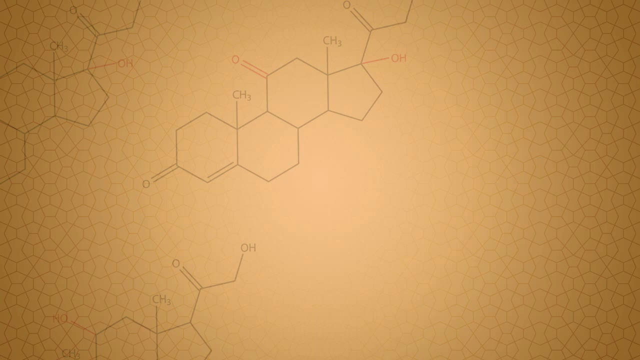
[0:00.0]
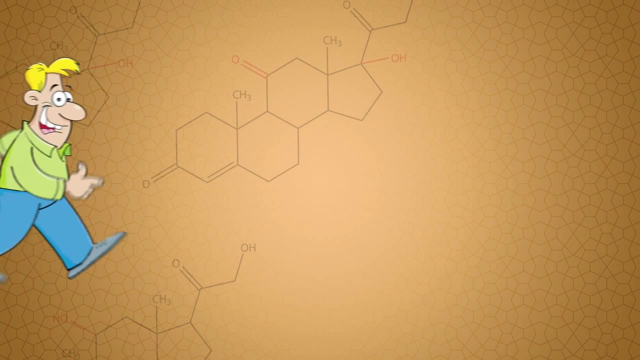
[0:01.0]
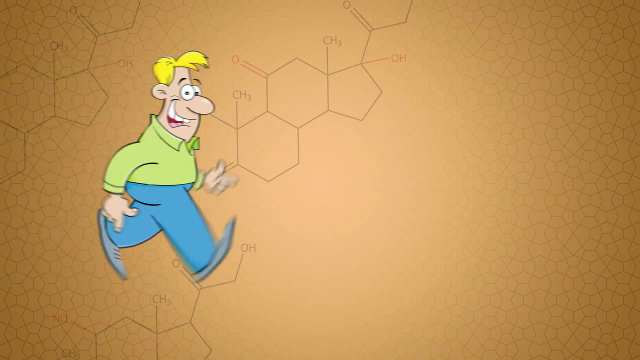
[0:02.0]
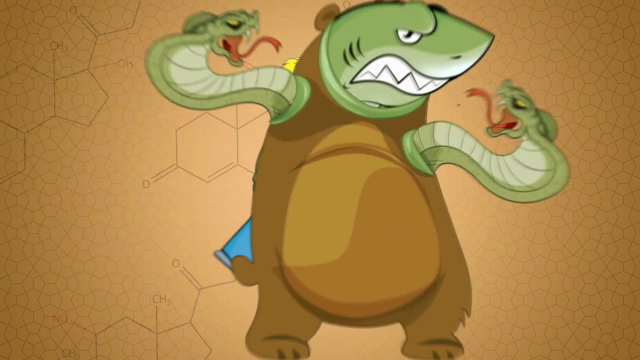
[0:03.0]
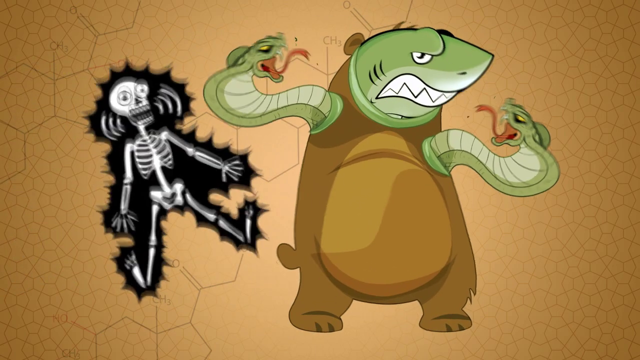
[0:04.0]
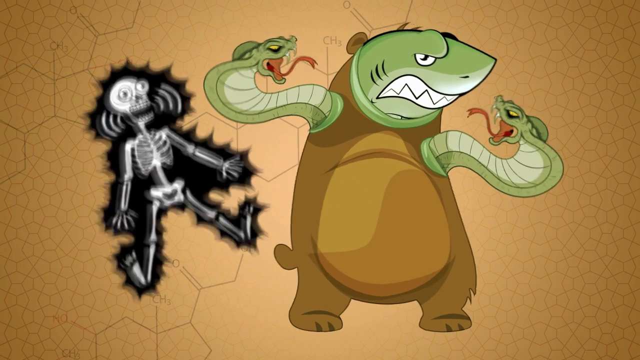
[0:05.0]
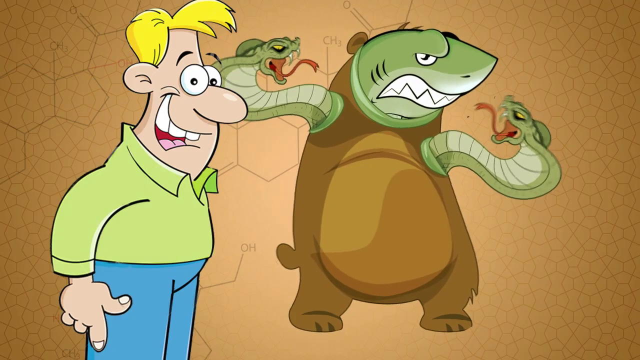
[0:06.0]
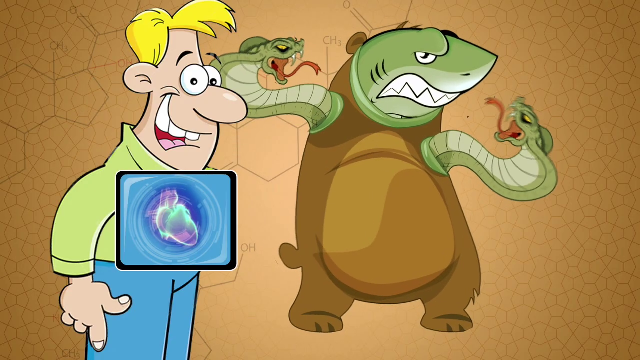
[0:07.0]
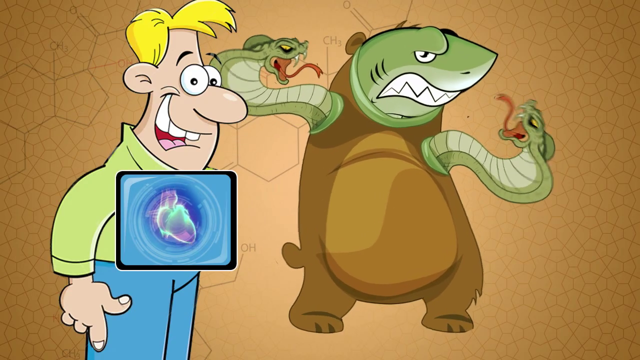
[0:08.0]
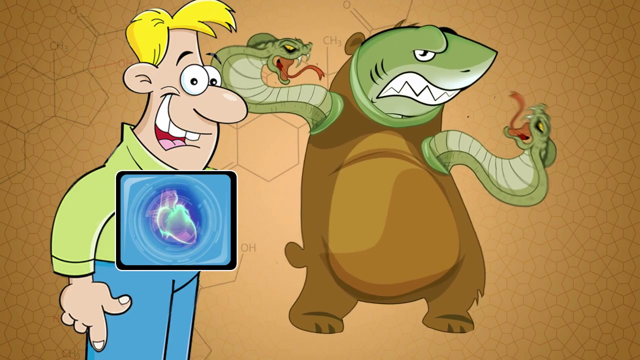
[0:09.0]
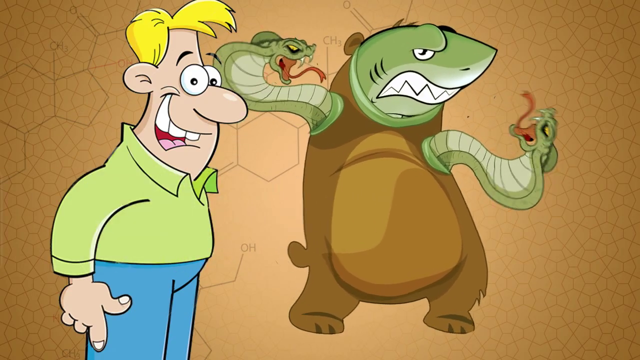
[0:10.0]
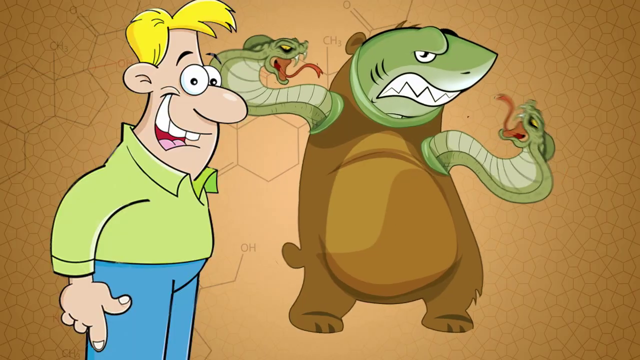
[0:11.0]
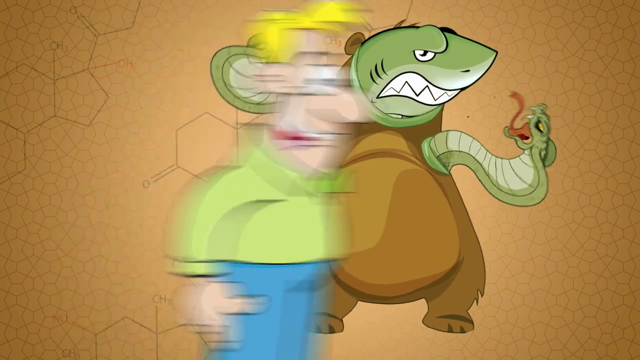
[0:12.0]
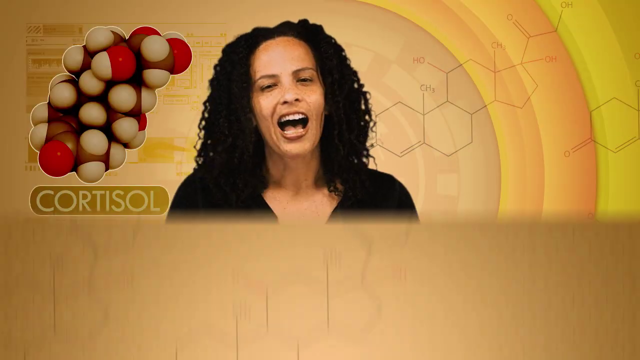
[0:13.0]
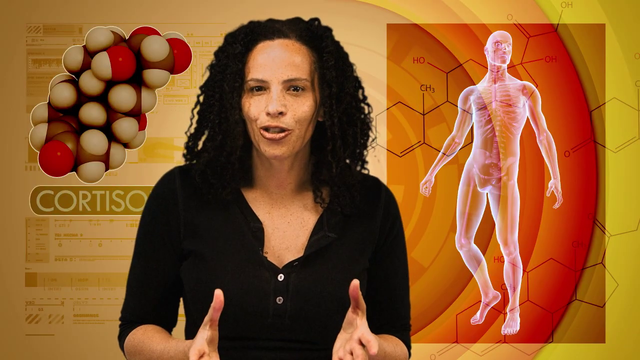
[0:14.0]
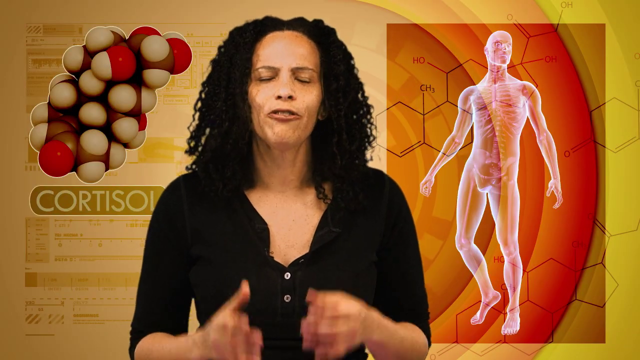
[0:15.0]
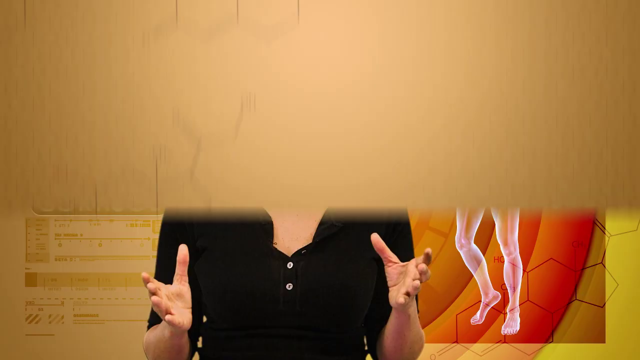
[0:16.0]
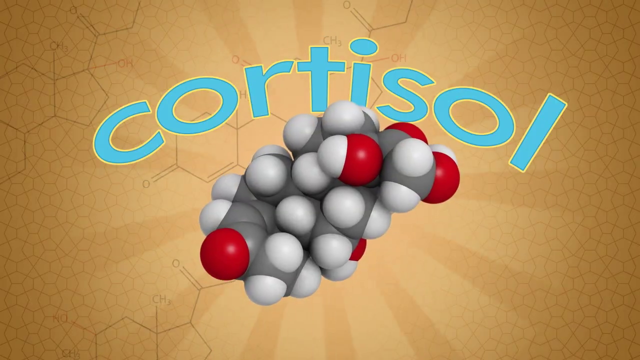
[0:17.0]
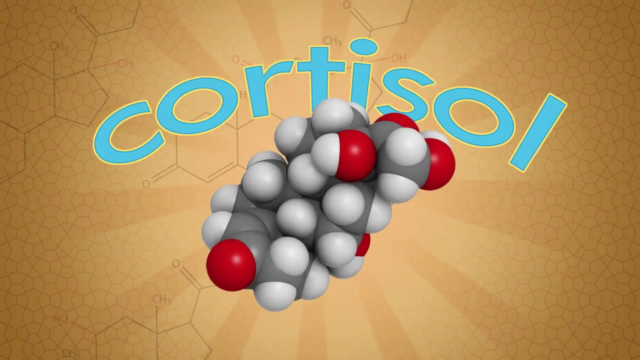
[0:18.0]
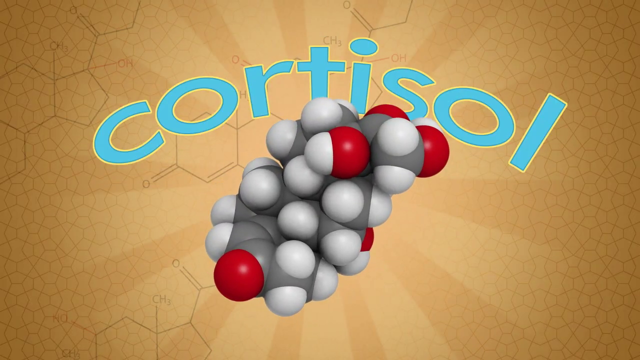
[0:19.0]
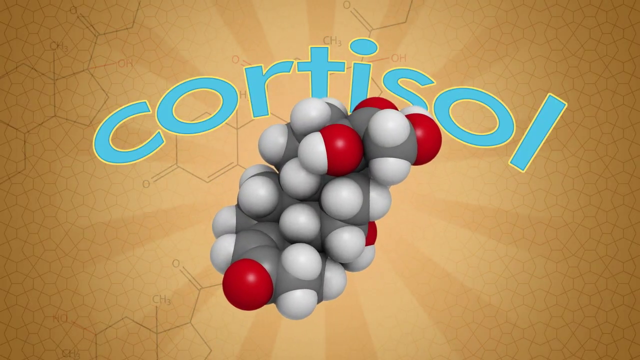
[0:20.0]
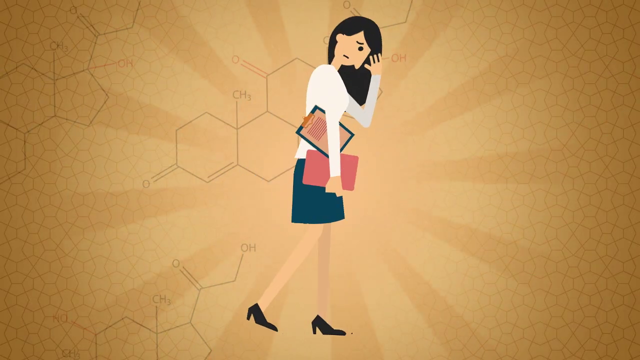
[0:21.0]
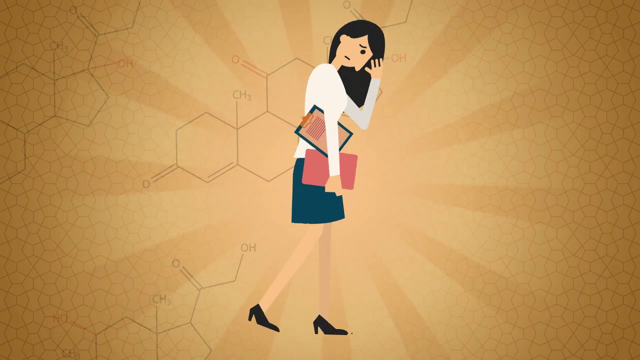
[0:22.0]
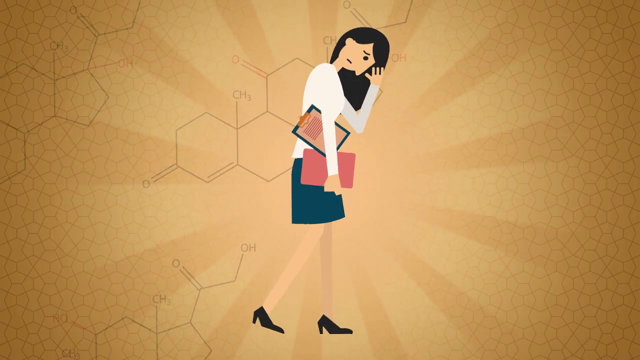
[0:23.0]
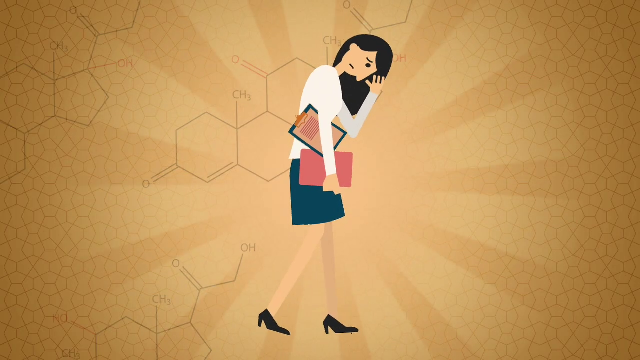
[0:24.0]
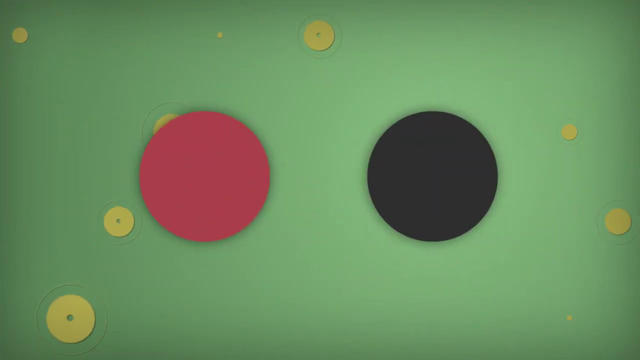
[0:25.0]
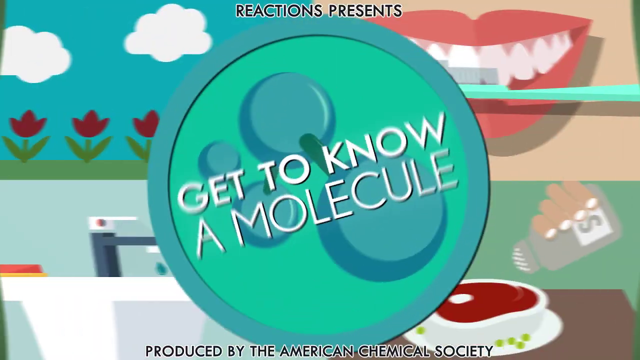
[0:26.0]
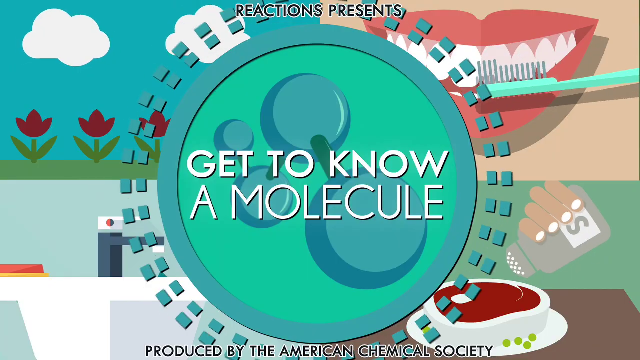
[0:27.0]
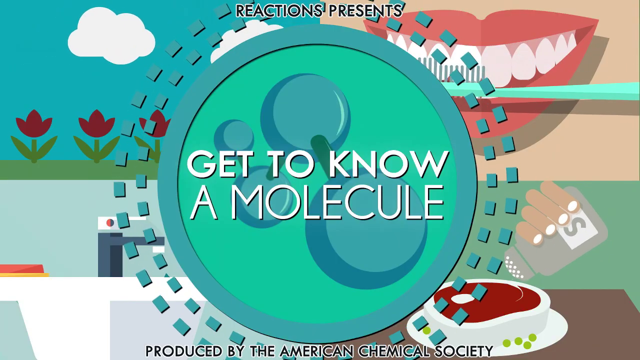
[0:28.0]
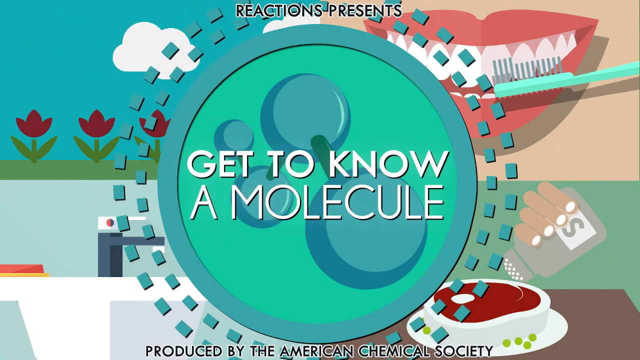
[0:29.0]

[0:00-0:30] Chemical formulas appear on a light brown background. A cartoon man walks in from the left; he wears light blue pants and a light green long-sleeved shirt, has yellow hair, and smiles while looking at the viewer. A monster appears: it is green, with the head of a shark, the body of a bear, and snakes for arms that look like cobras, and it looks to the right. The cartoon man is then on the left with an x-ray image of his heart in the middle, the heart beating, while the monster moves around on the right. Both characters move away to the right. A woman with black curly hair, wearing a dark-colored top, talks while looking directly at the viewer with her hands in front of her. The word "cortisol" appears on the left and an anatomy picture of the human body on the right. Next, the word "cortisol" is on top in light blue above a molecule made of white, red and gray parts. A cartoon woman who looks worried looks downward with one hand on her head. A large caption in the middle reads "Get to Know a Molecule," with the words "Reactions Present" at the top center. Surrounding images show a smiling mouth with teeth being brushed by a toothbrush in the top right, a hand sprinkling salt from a salt shaker onto a raw steak in the bottom right, a sink in the bottom left, and red flowers under a blue sky with a white cloud in the top left.